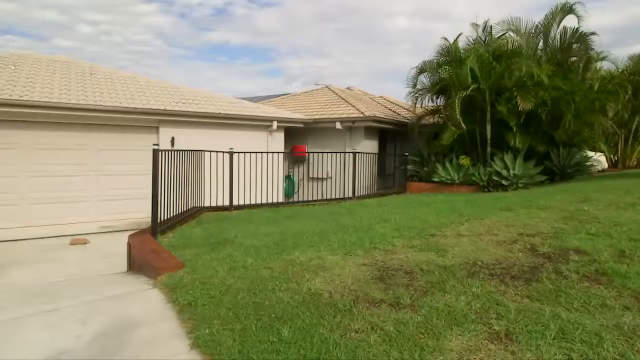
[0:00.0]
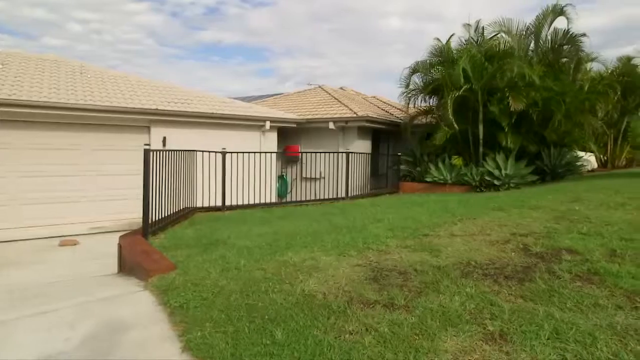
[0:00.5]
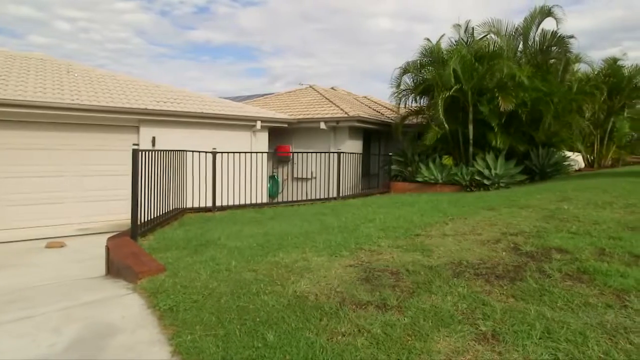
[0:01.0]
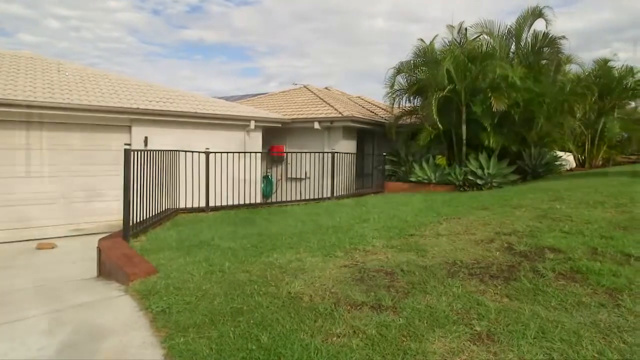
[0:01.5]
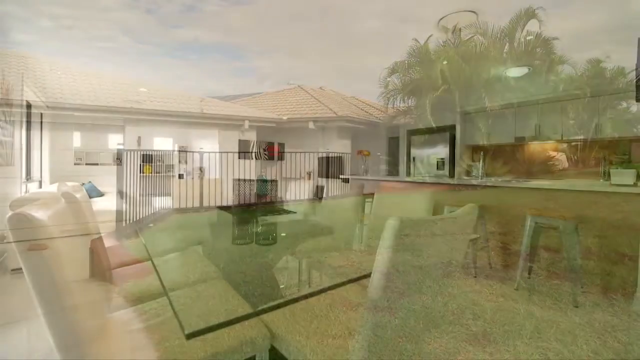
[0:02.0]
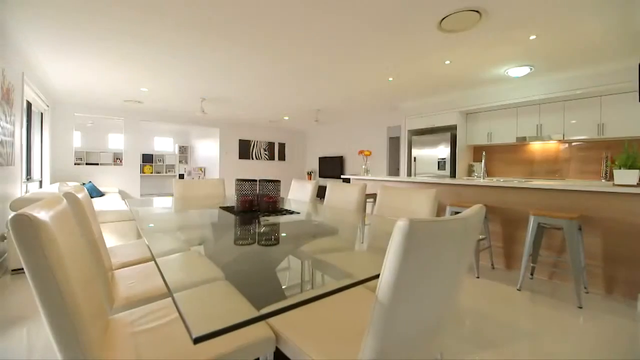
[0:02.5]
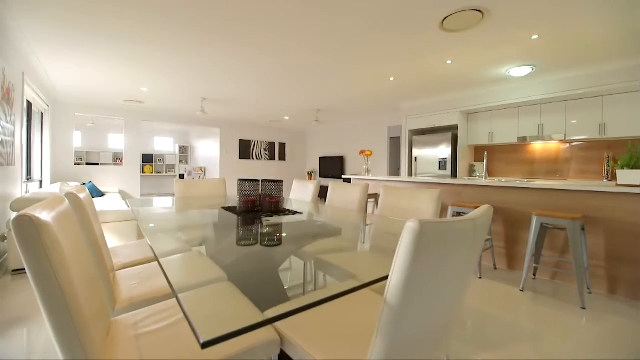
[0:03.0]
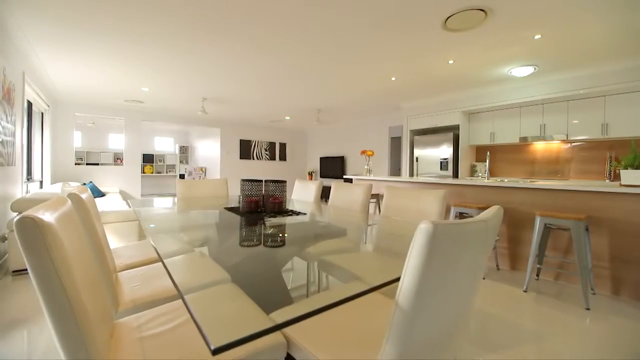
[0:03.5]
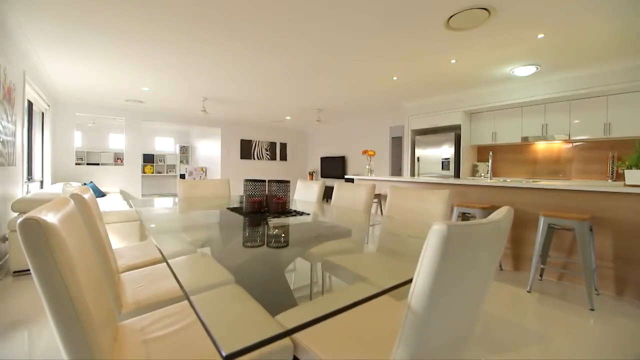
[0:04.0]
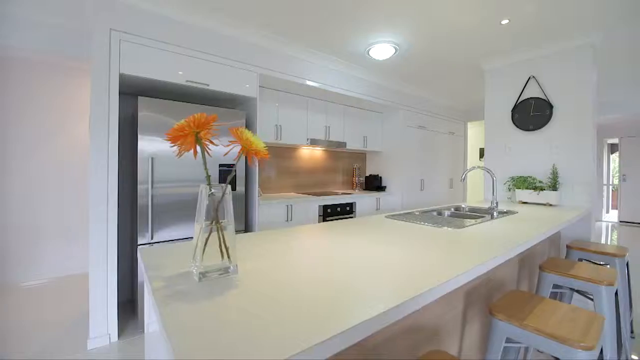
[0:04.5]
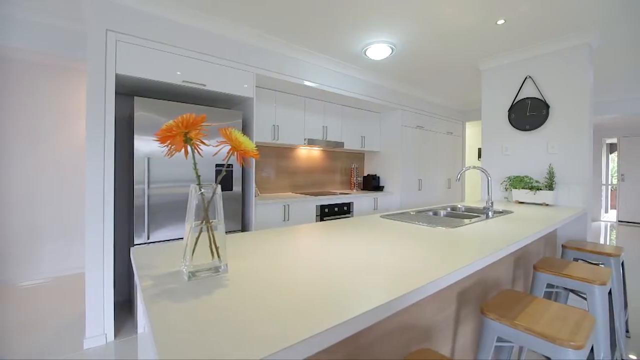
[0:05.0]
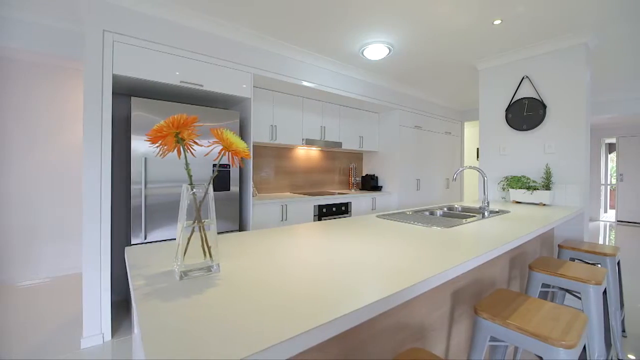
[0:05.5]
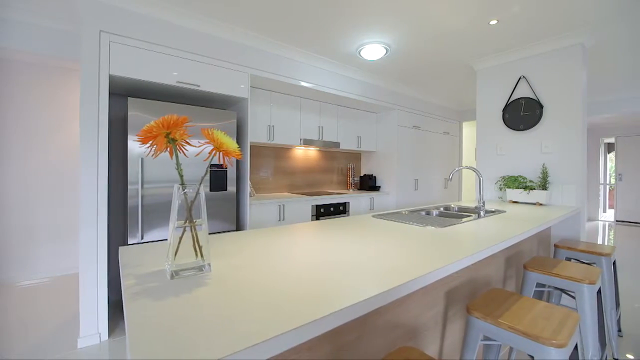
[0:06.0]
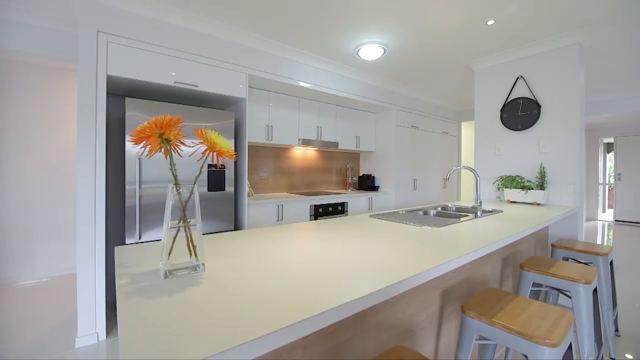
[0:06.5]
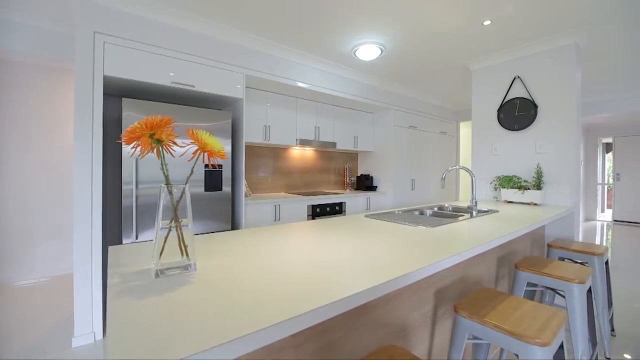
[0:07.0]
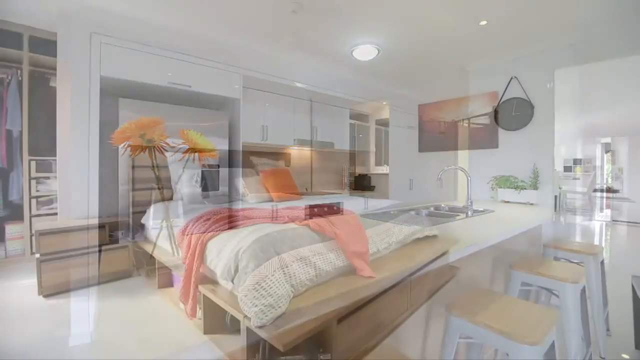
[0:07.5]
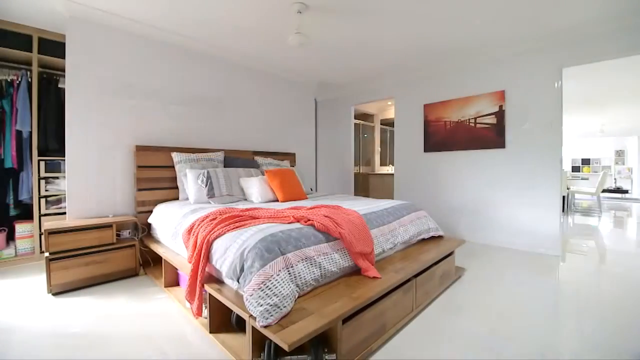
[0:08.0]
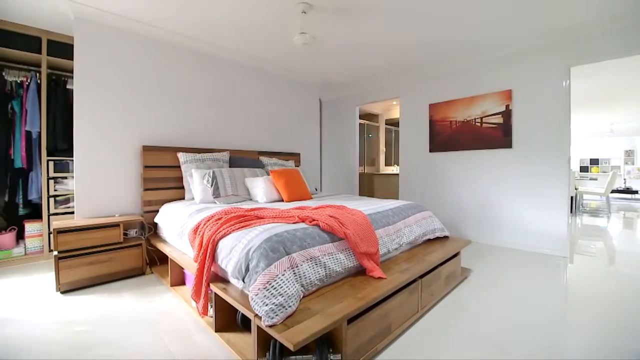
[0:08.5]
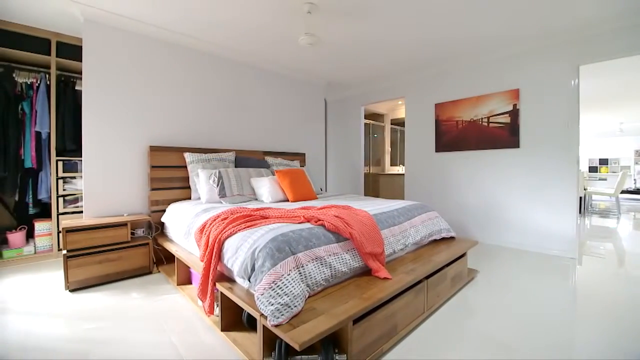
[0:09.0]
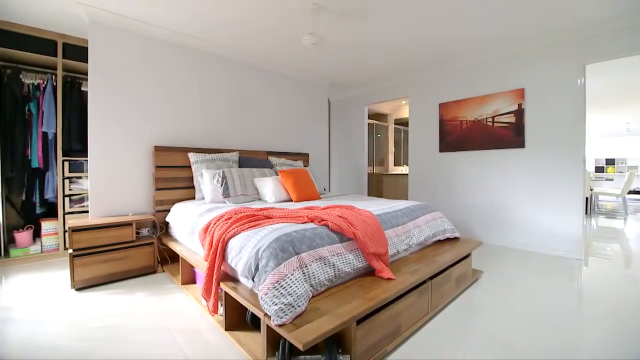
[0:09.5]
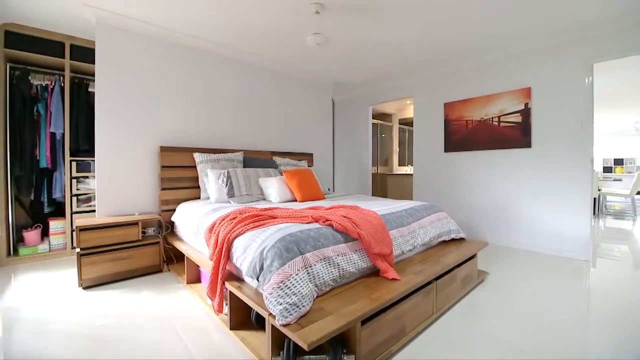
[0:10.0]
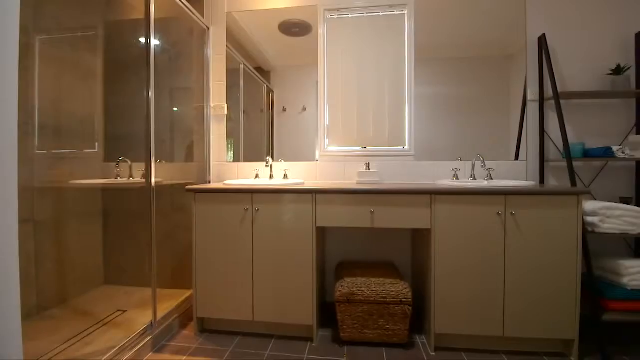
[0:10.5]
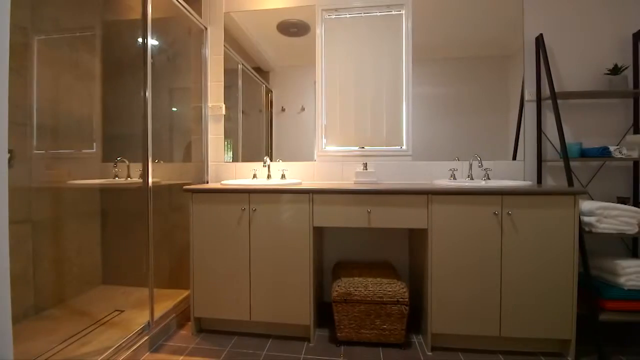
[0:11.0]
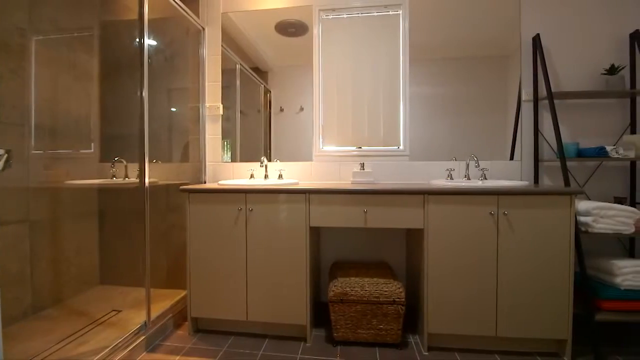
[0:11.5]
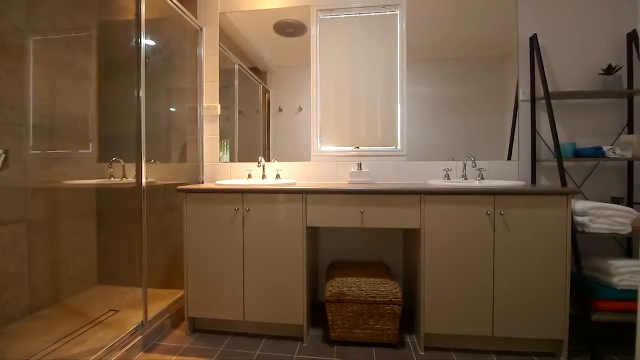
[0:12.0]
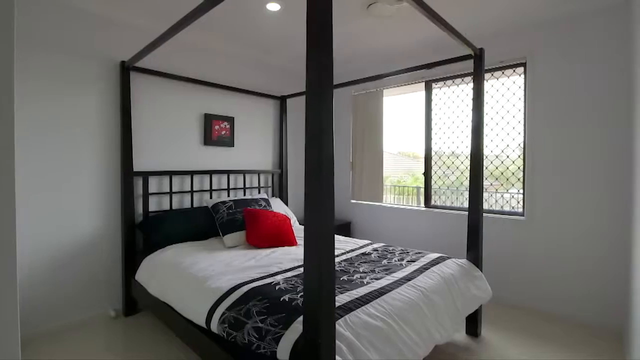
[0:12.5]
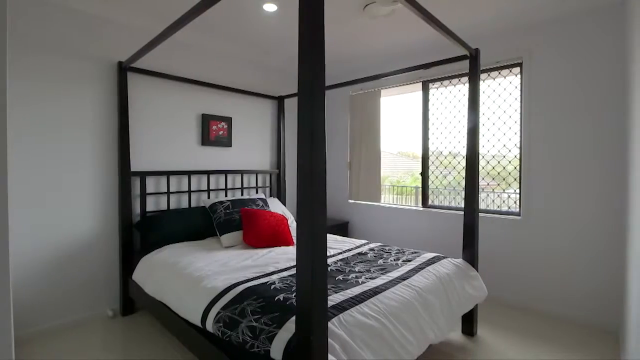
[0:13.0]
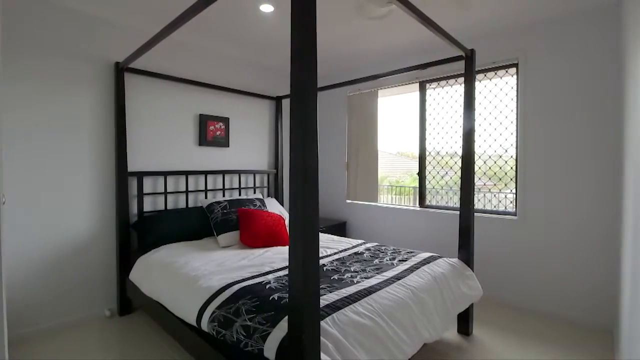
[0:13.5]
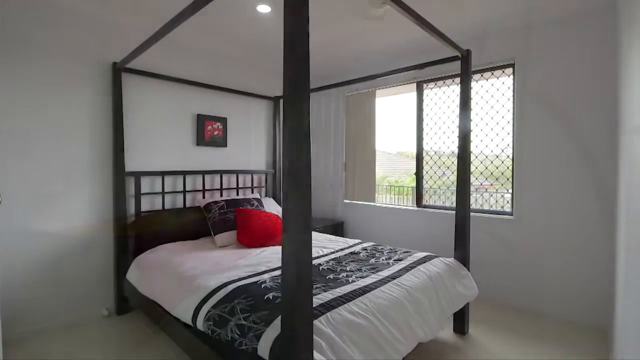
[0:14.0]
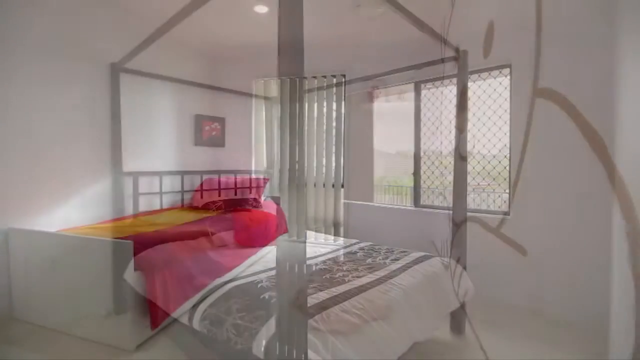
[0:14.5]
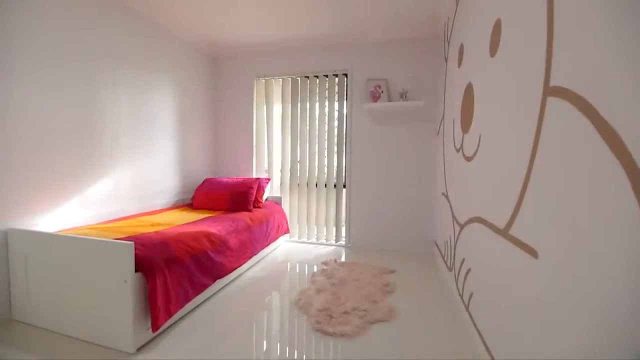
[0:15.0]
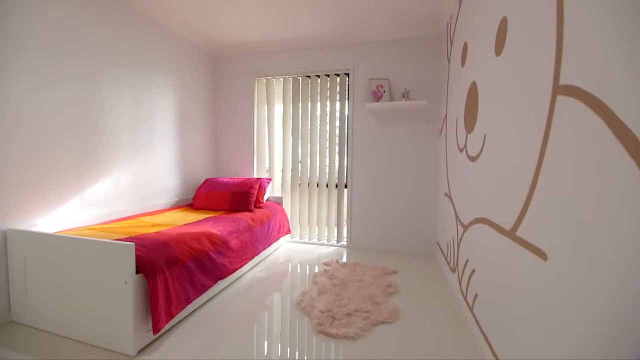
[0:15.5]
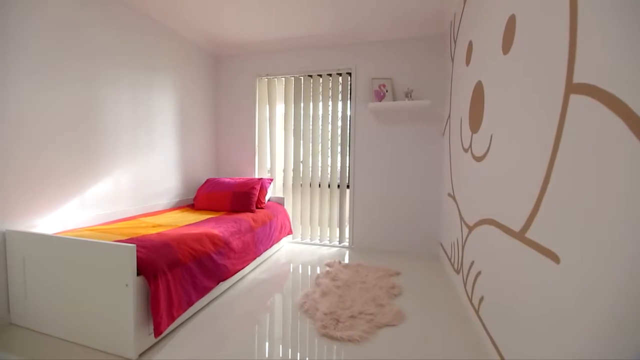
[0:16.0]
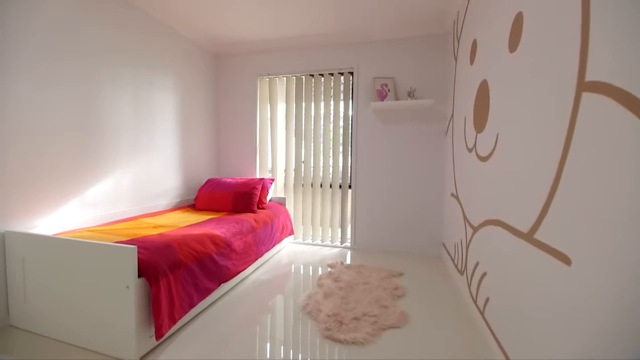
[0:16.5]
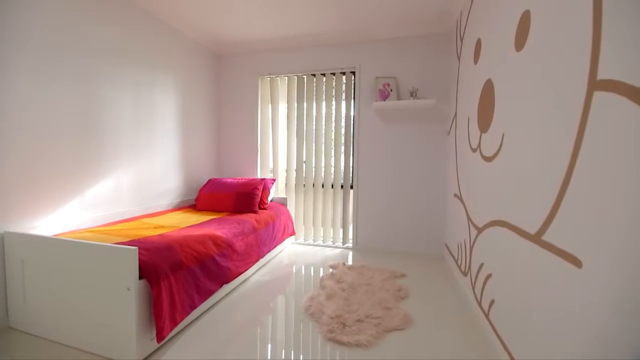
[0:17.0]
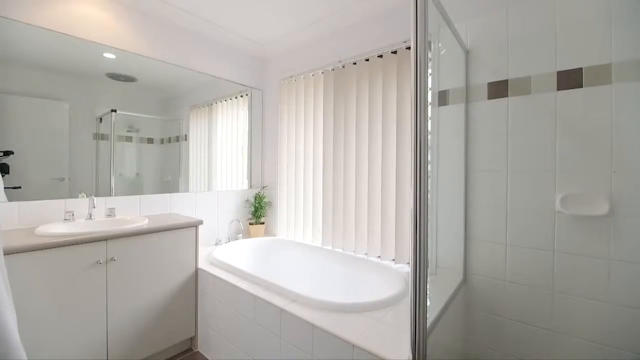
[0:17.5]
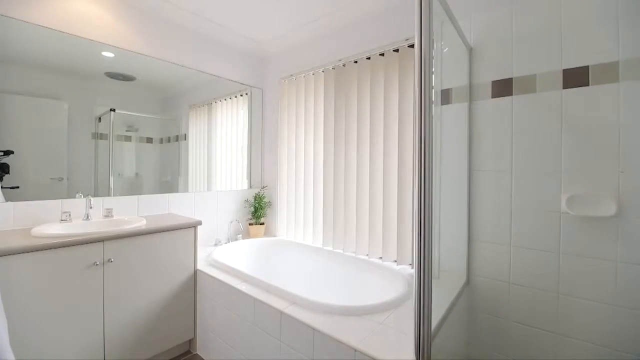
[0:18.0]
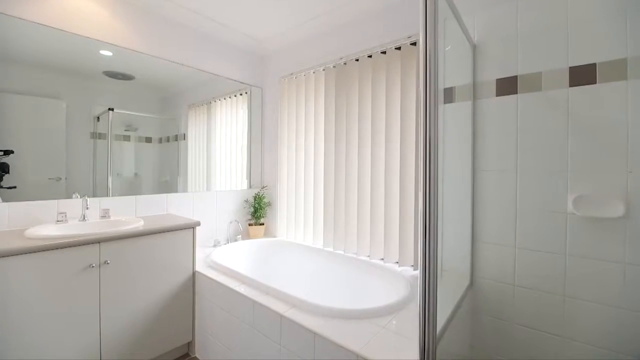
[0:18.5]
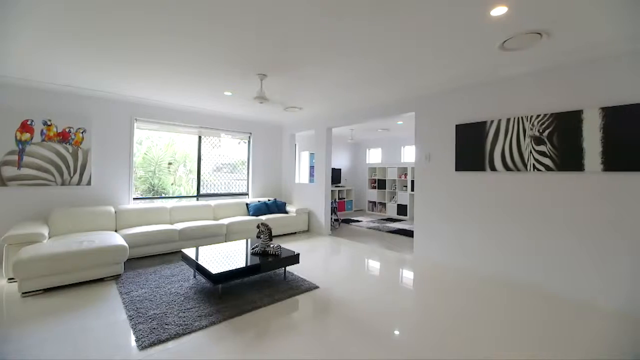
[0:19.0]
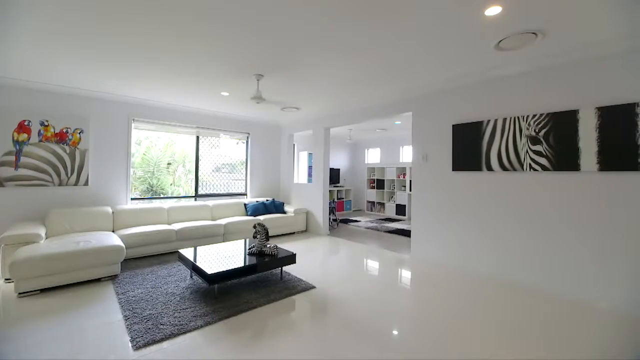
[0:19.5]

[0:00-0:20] The video opens on the exterior of a house with a nice green lawn, then cuts inside, where everything is very clean and tidy. The first room is the kitchen, and with very few personal belongings it almost looks as if no one lives there and it has perhaps been staged for showing. There is a clock on the wall, two big orange flowers in a vase on one side of the counter, and a plant on the other side of the kitchen counter. The video then cuts to the bedroom, which is also very clean and tidy. Everything is very white, including the walls, floor and ceiling. The bed is made up with a white and grey duvet and matching white and grey pillows, and there is an orange throw at the bottom of the bed with a matching orange pillow. Next comes the bathroom, which is a little more muted, in cream tones rather than bright white. It has a large standing shower, a double sink with drawers underneath, and a unit with towels.